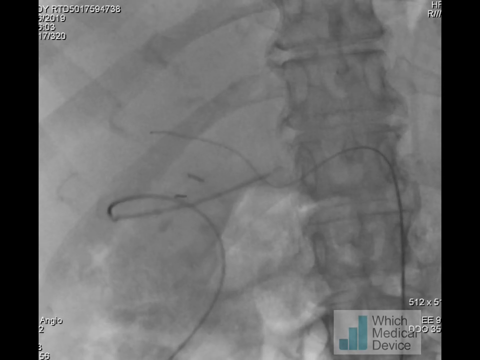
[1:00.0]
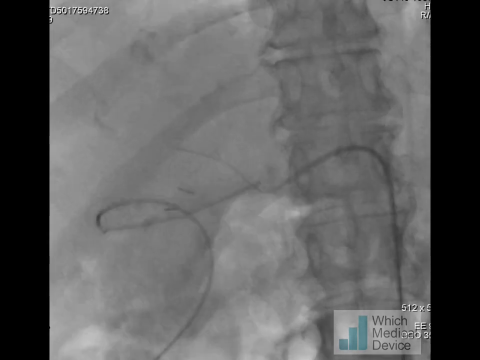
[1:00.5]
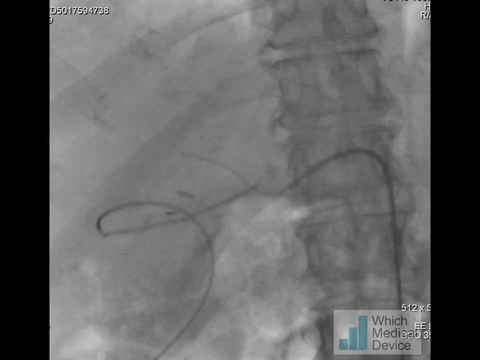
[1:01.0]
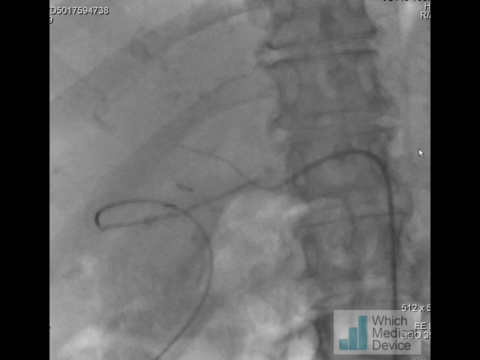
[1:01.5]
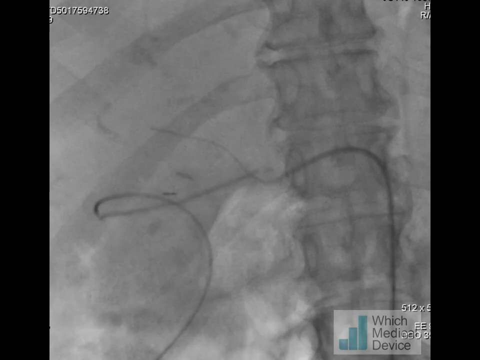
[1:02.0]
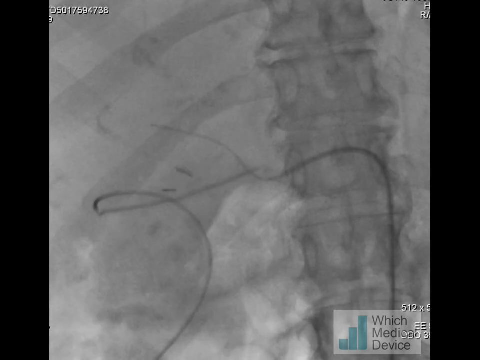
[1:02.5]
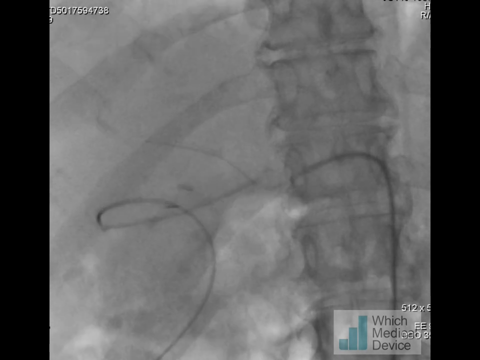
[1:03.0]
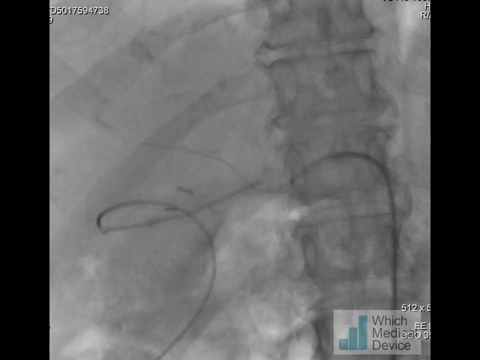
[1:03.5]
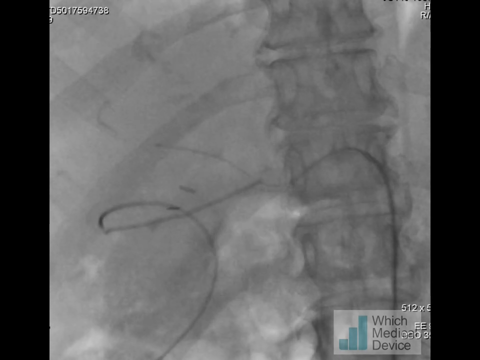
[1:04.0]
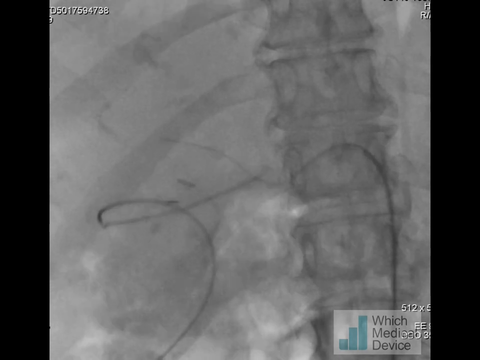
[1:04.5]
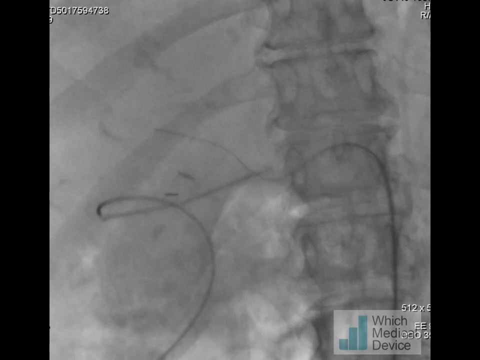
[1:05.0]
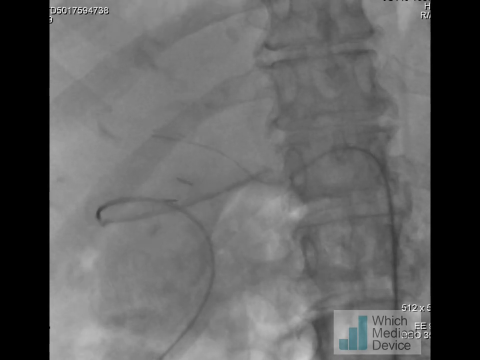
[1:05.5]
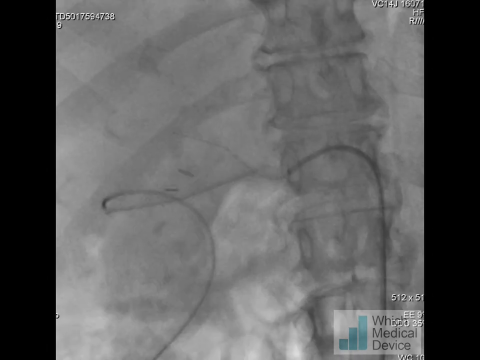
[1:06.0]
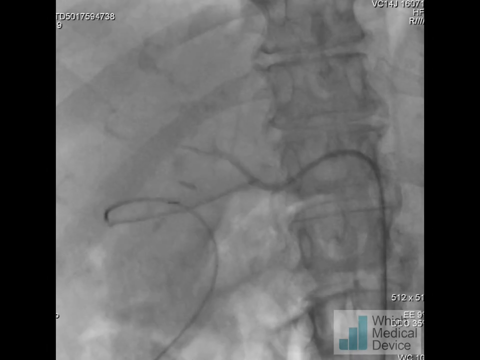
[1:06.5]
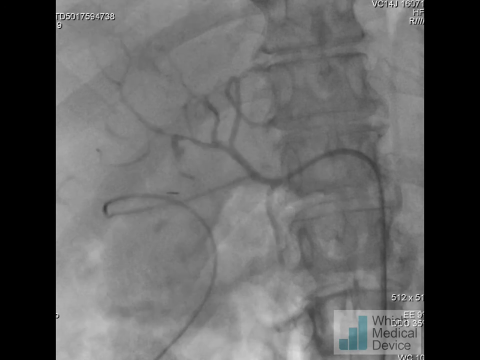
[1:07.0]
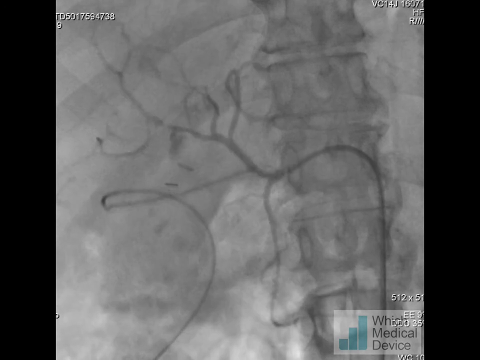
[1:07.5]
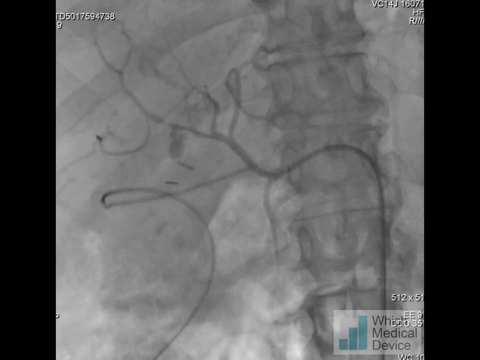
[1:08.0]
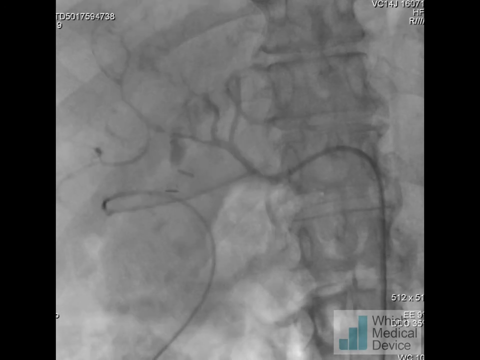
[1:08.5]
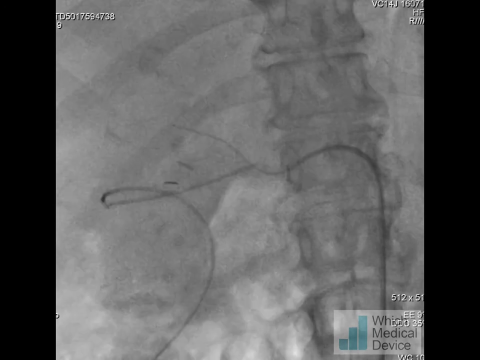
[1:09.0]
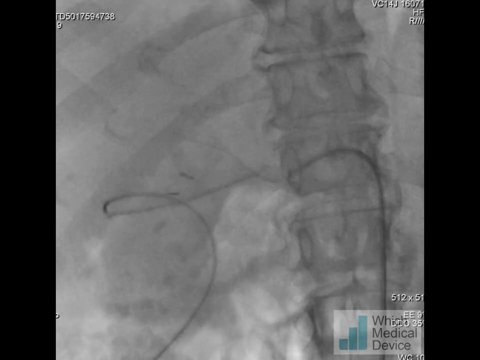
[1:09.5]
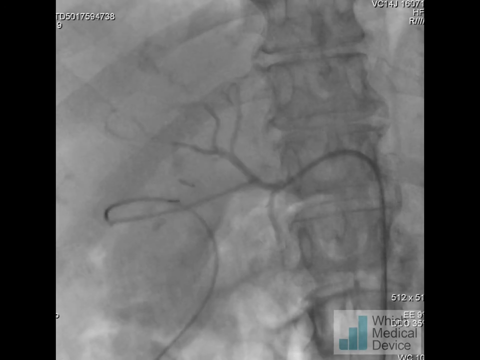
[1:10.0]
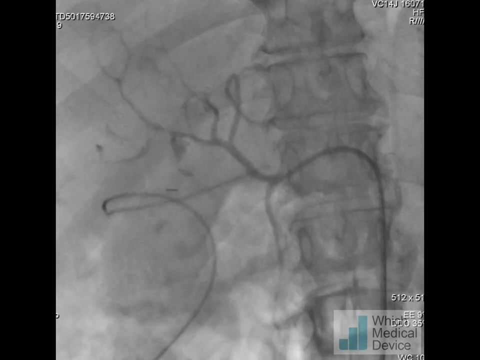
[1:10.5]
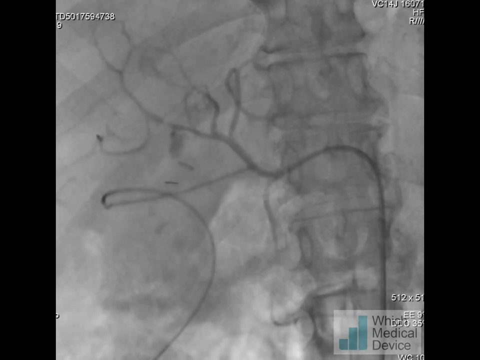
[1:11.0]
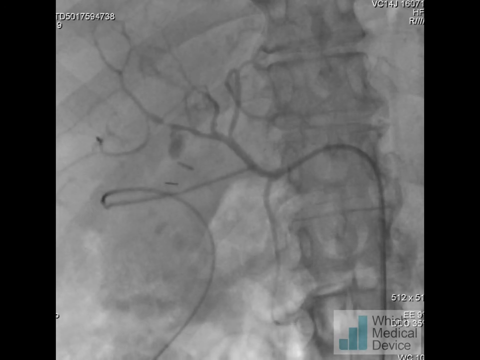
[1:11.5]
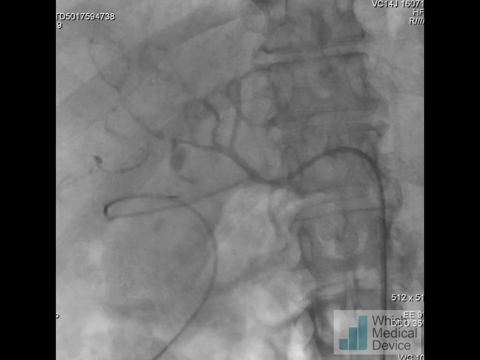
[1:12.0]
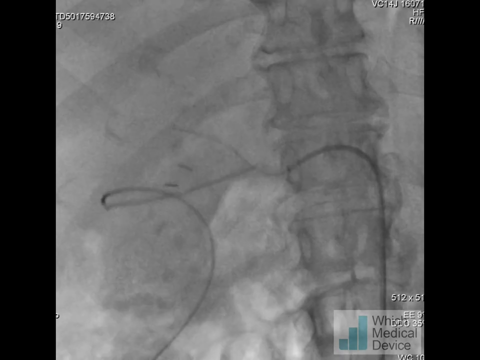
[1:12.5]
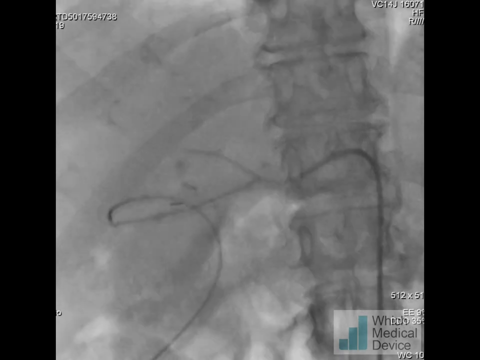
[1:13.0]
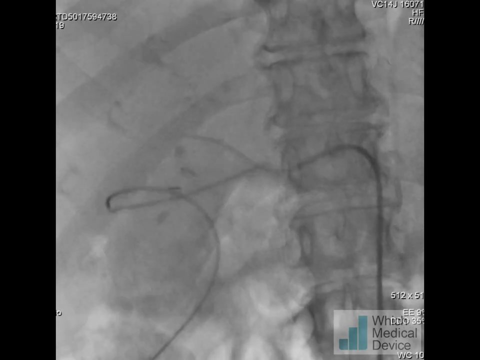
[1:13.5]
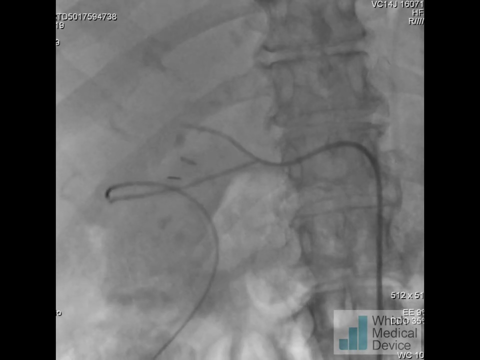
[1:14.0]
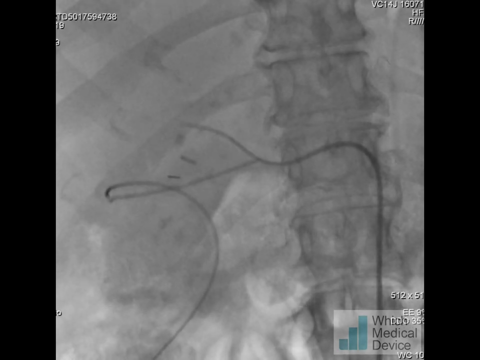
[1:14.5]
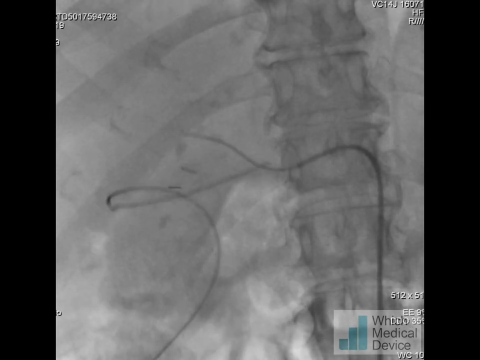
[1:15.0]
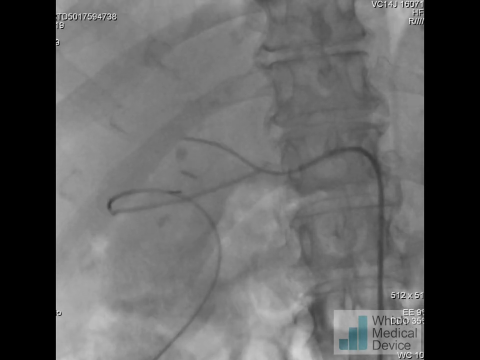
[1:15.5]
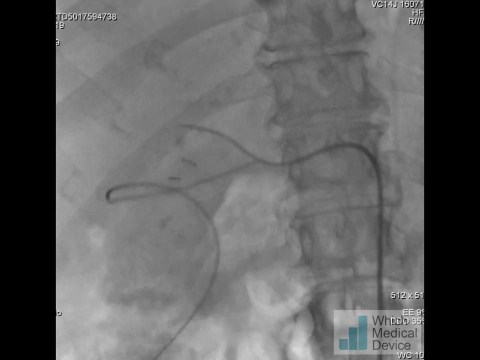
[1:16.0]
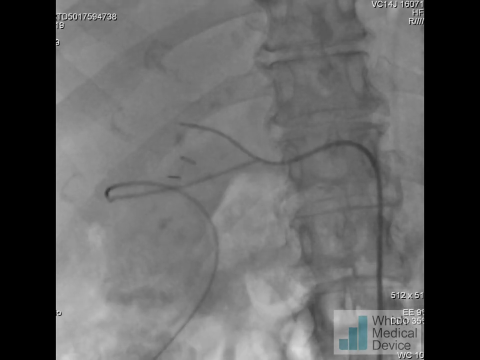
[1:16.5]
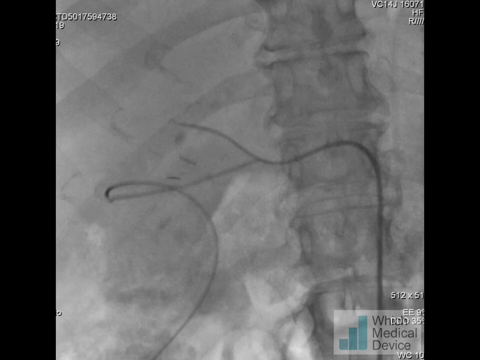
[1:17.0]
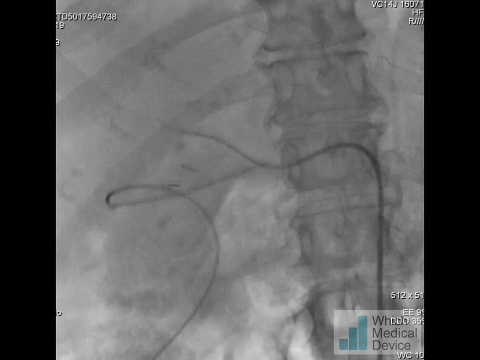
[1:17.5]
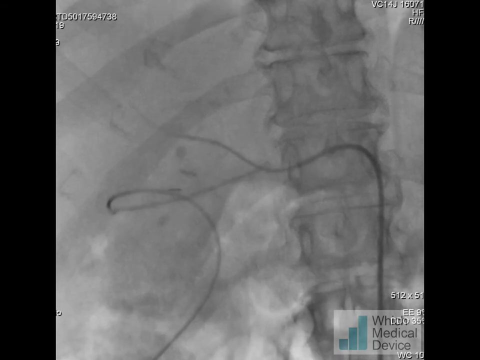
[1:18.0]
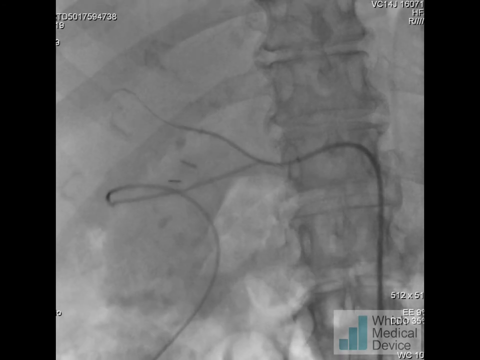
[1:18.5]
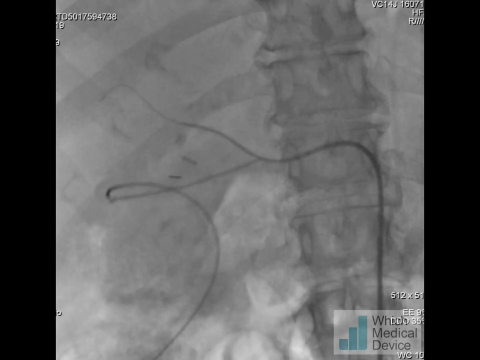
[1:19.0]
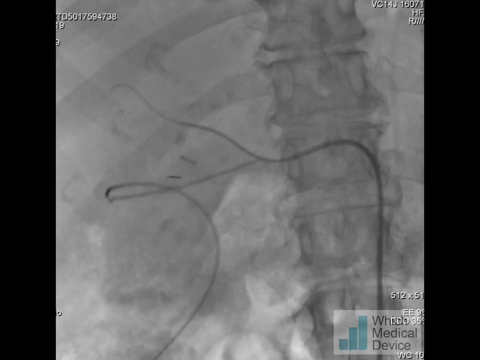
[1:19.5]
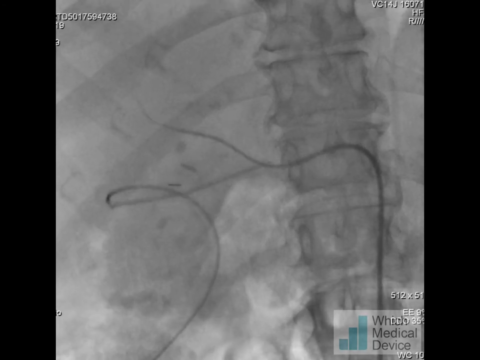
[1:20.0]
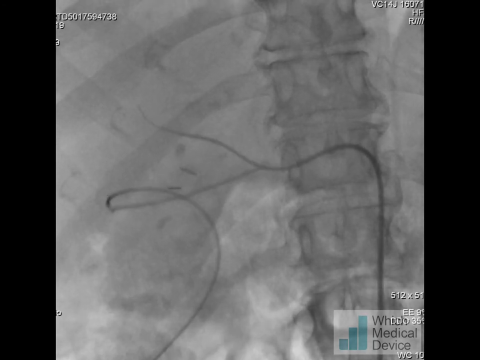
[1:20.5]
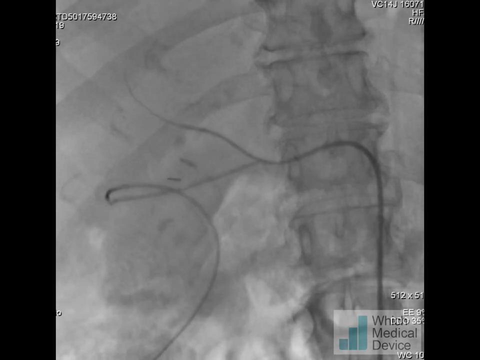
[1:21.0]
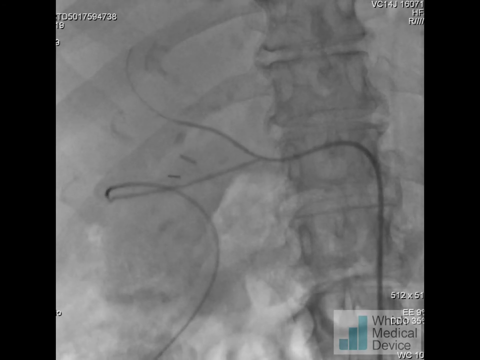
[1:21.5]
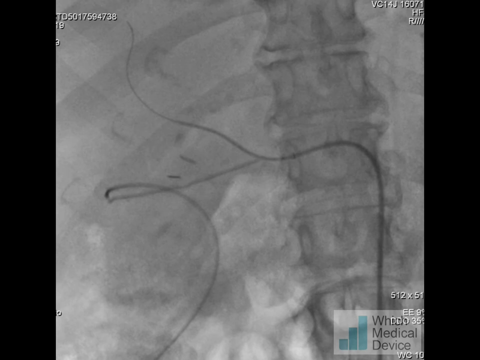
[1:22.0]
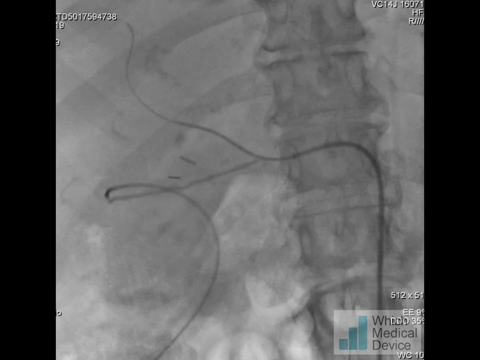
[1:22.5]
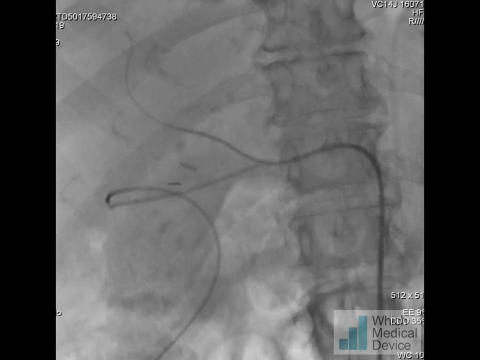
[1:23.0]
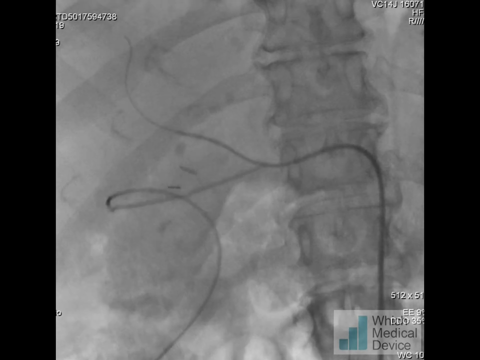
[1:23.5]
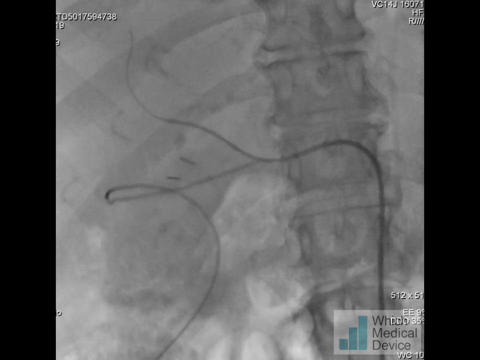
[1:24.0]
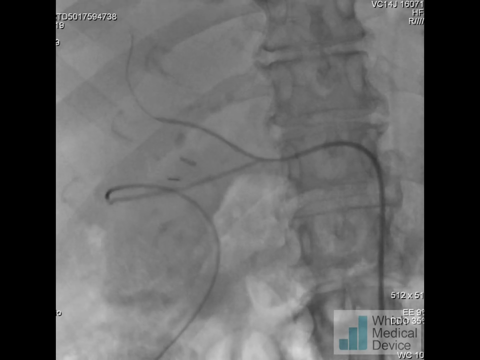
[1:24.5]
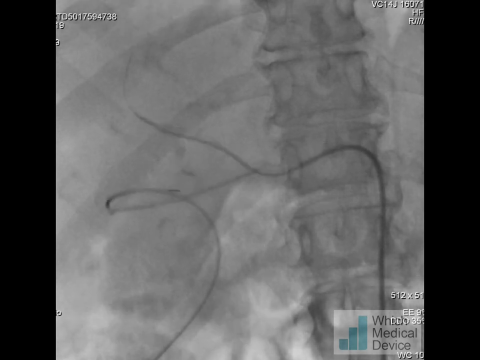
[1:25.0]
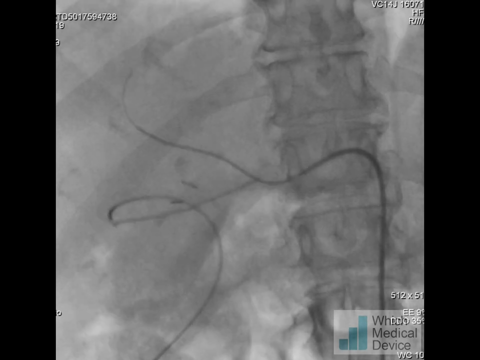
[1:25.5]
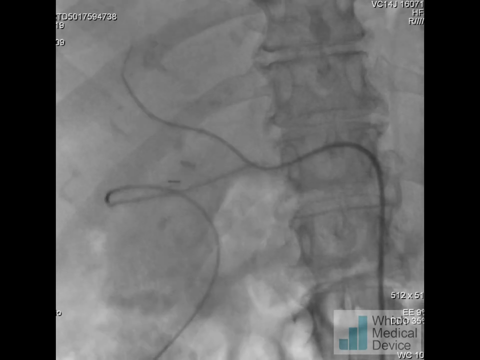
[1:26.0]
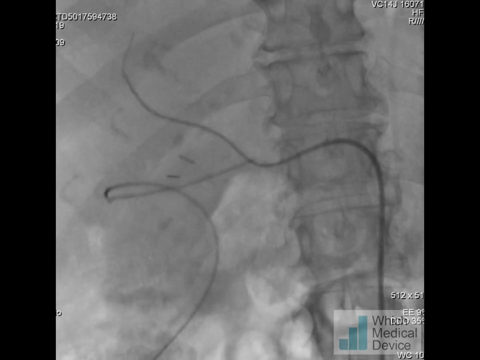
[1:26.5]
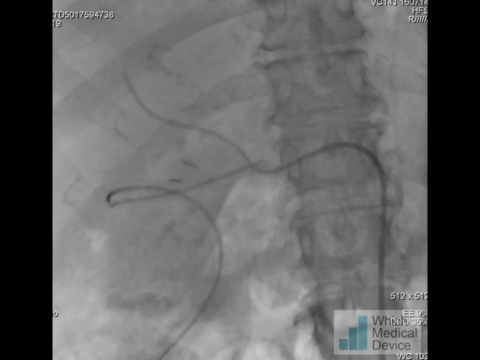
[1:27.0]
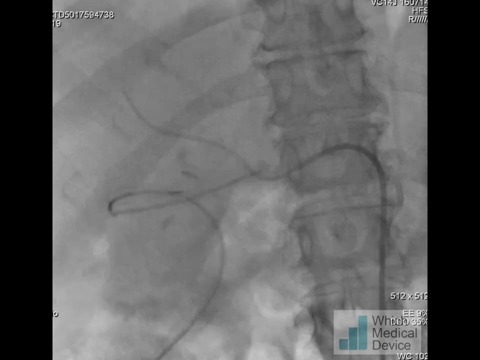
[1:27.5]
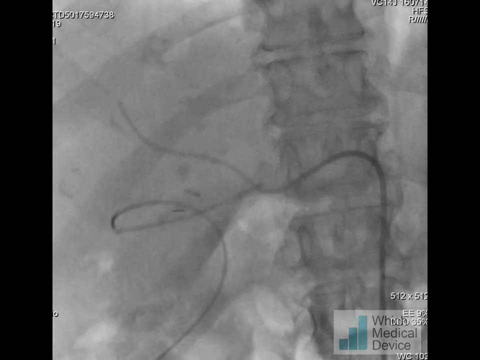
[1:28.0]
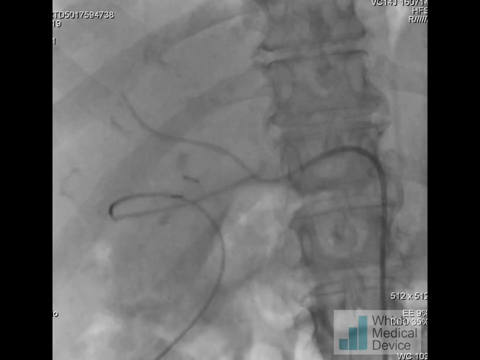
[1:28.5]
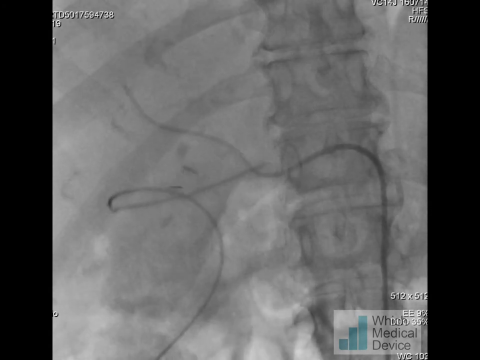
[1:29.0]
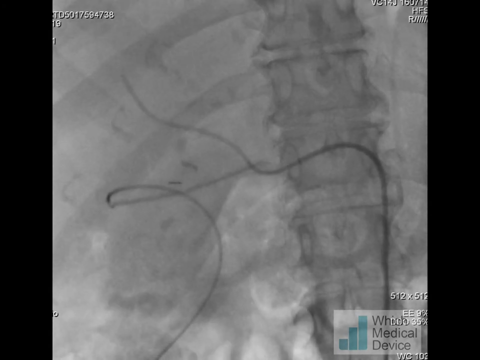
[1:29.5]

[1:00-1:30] On the MRI, a string in the background over a person's spinal area moves up and down; it is a little curved and circular and moves downward. Suddenly the veins in the area light up, become darker and move, and then just as suddenly disappear. The string then curves upward into the upper left. The string is pumped up and down, maybe as the person breathes, and this up-and-down movement carries the string up and down with it.